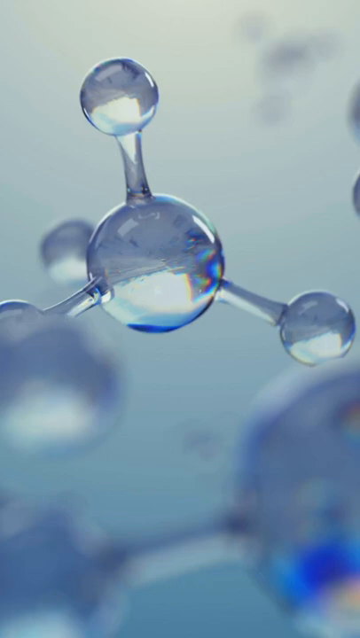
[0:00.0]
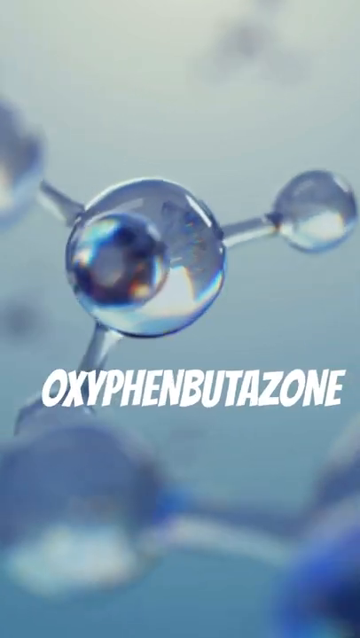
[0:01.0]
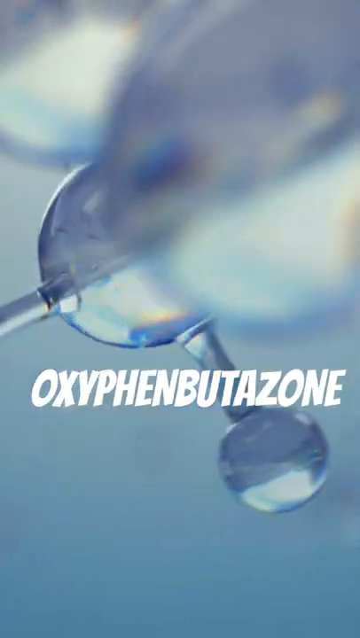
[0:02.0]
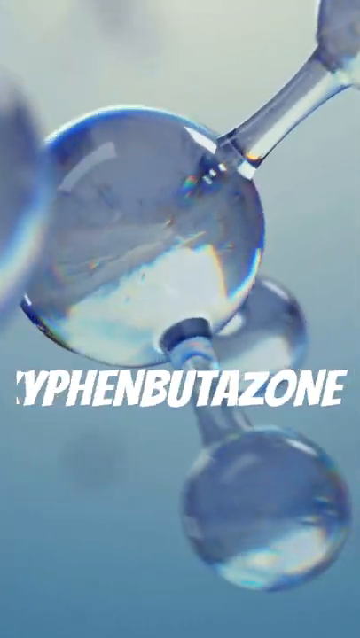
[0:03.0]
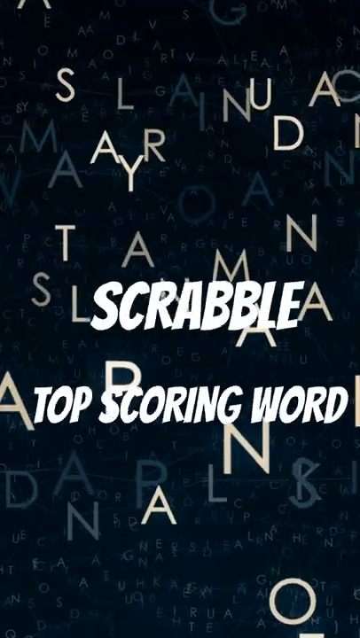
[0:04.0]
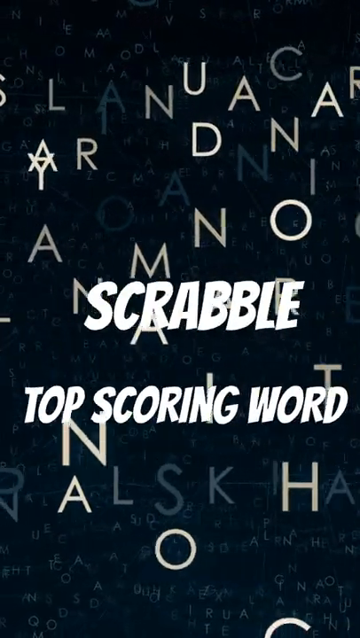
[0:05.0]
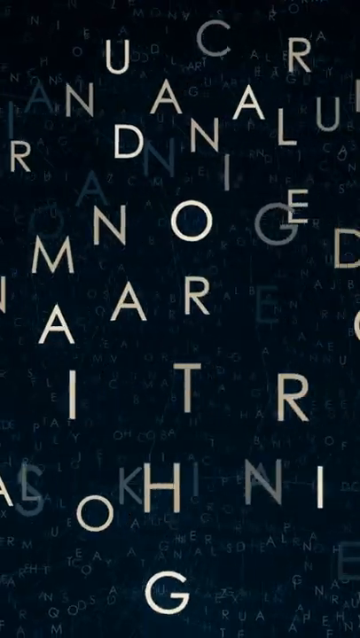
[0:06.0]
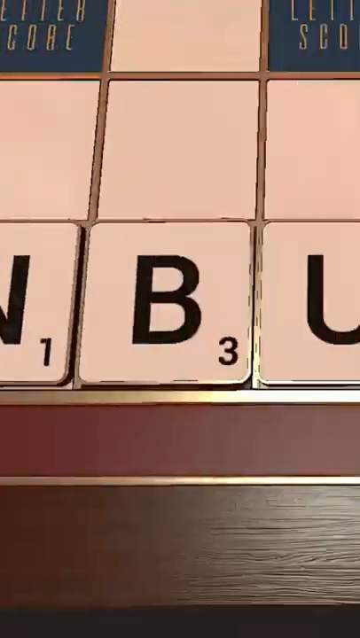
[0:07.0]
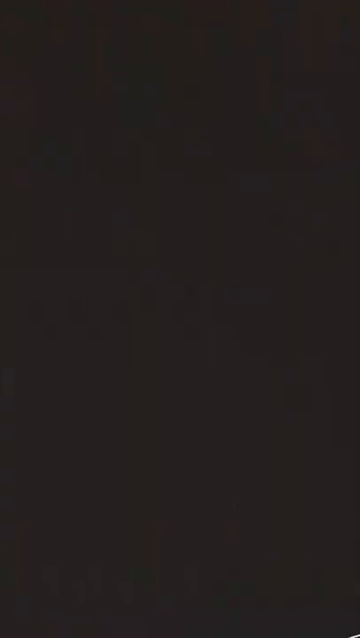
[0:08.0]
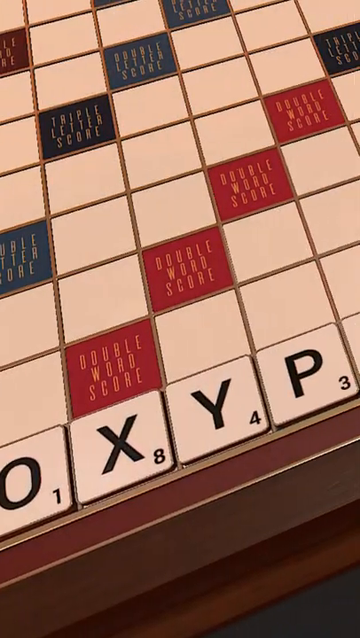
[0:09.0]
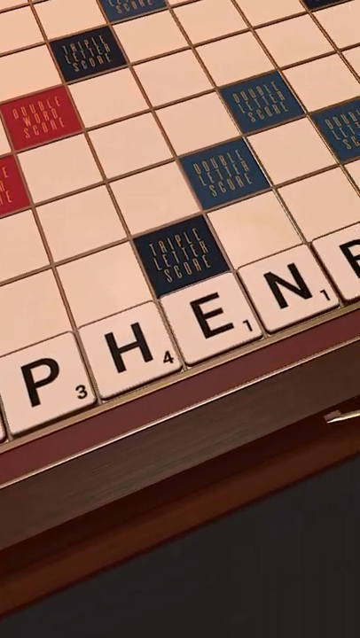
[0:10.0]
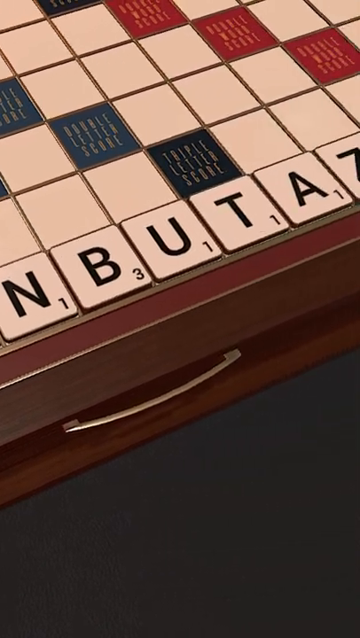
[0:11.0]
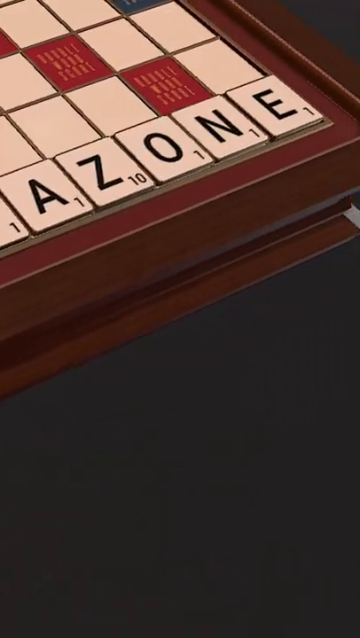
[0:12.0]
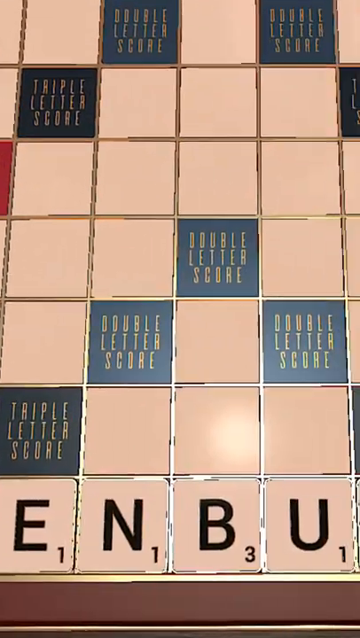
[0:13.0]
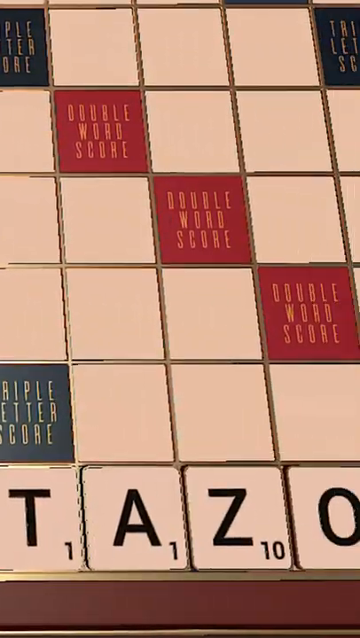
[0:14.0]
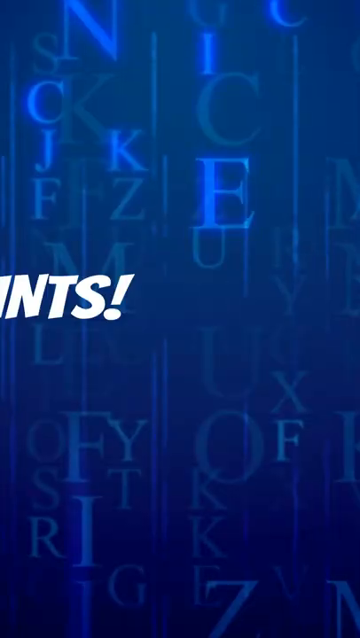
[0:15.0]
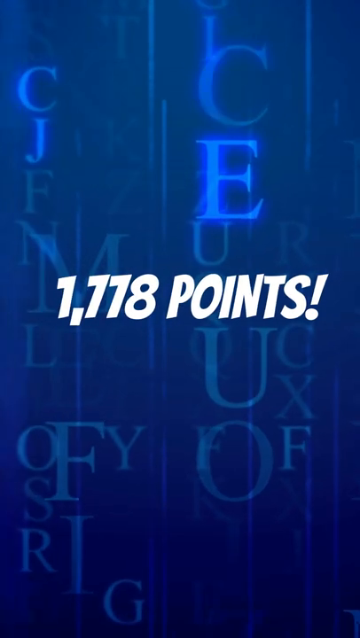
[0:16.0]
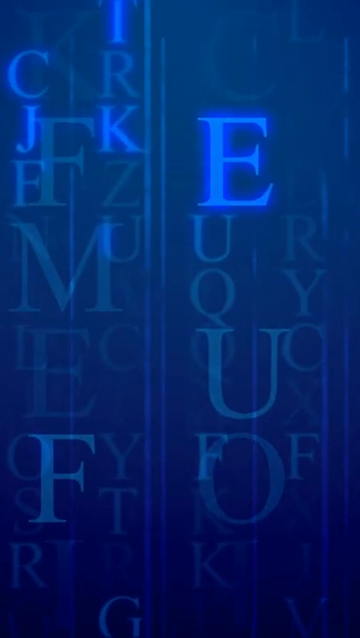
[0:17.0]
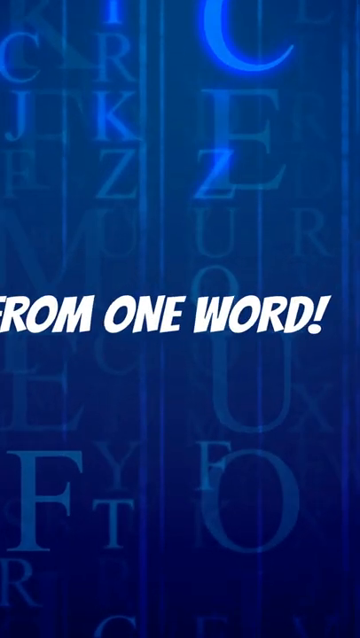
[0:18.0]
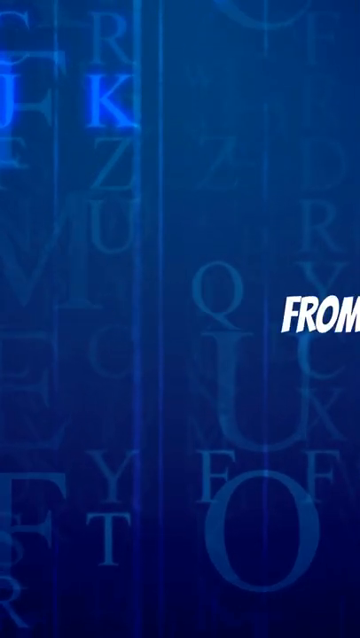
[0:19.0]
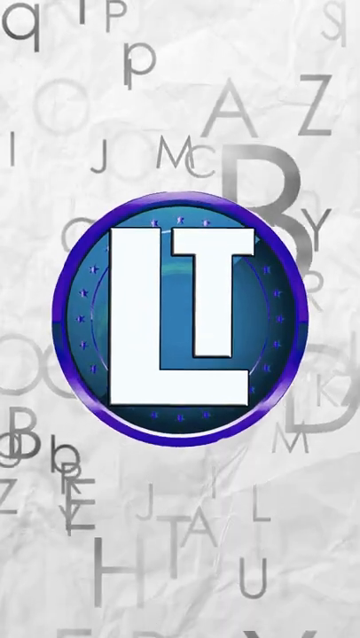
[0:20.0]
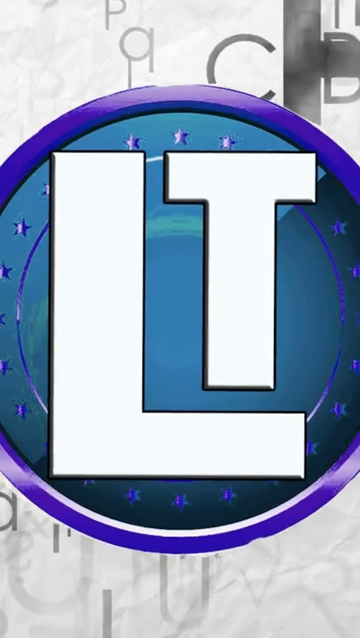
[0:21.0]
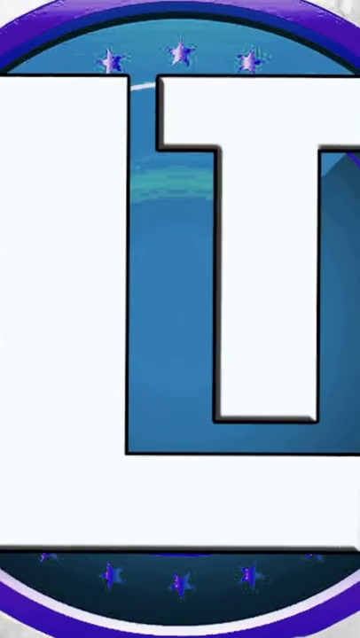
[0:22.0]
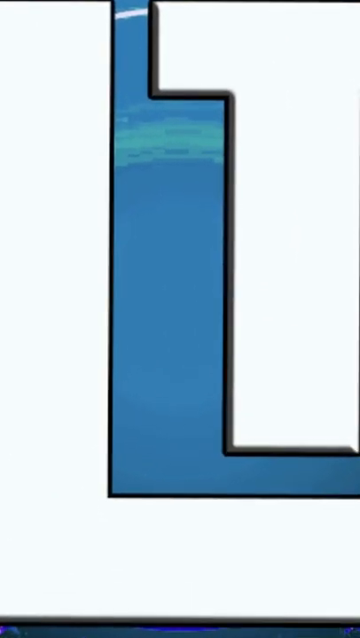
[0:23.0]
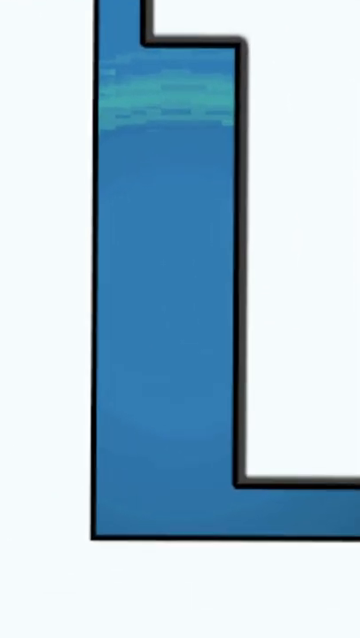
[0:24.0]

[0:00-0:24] A silvery chemical structure spins around slowly, and across the screen in white capital letters is the word "oxyphenbutazone." The structure continues to spin, and then a black screen appears with jumbled white capital letters floating in the middle. Across the jumbled letters, in white capital letters, is the text "Scrabble Top Scoring Word." The camera pans quickly over a Scrabble board, showing the letters and the numbers in the lower right corner of each Scrabble letter. The camera then moves more slowly across the board, where the letters p-h-e-n-b-u-t-a-z-o-n-e can be made out, the spelling of the chemical structure's name shown at the start. The screen turns blue, with white text reading "1778 points!", the Scrabble score from just that one word. The video ends on a white background with a logo of the capital letters L and T in white on a blue circular background.